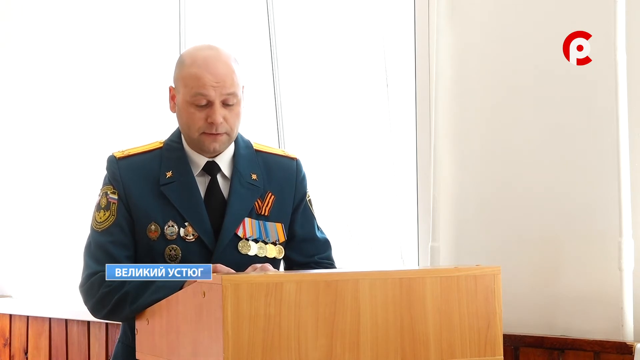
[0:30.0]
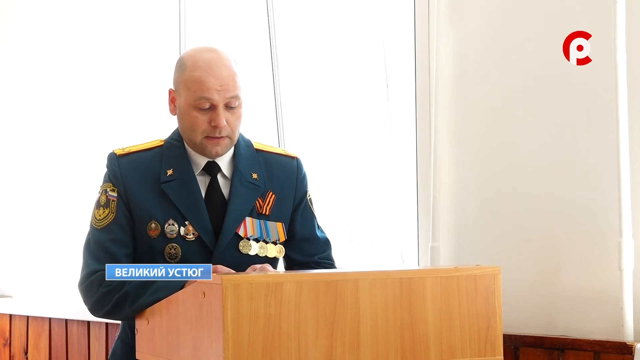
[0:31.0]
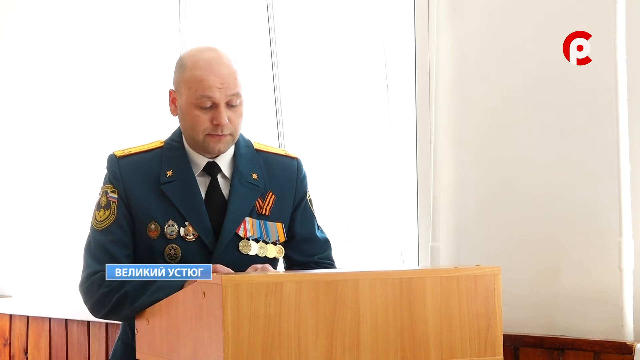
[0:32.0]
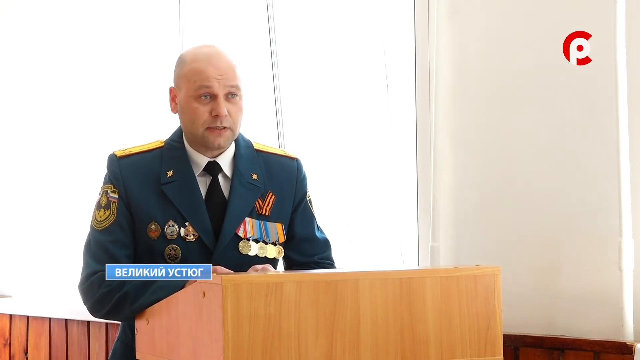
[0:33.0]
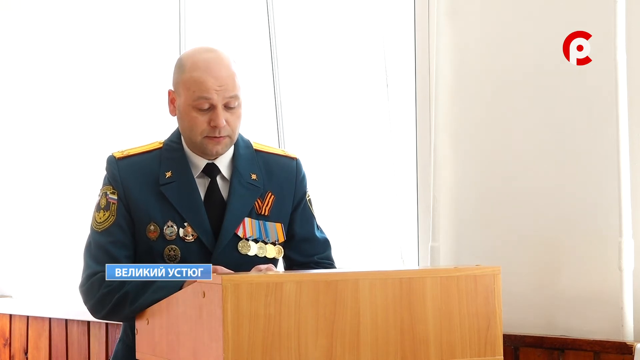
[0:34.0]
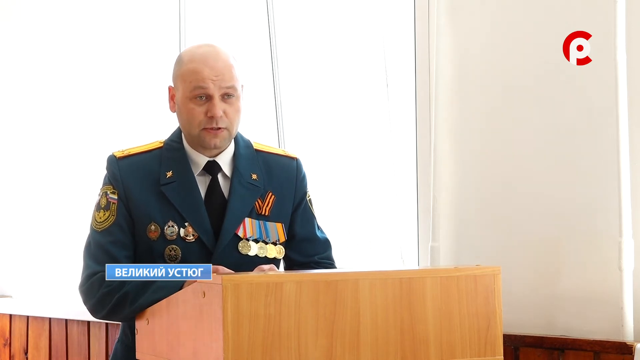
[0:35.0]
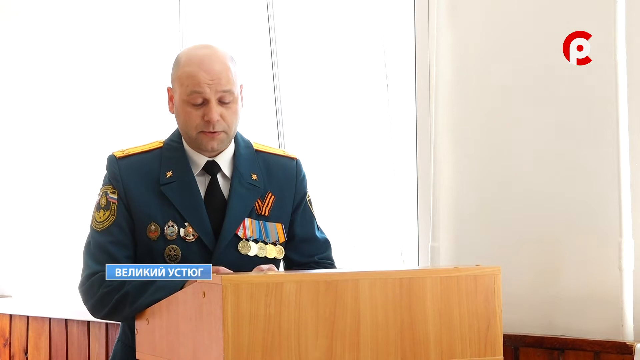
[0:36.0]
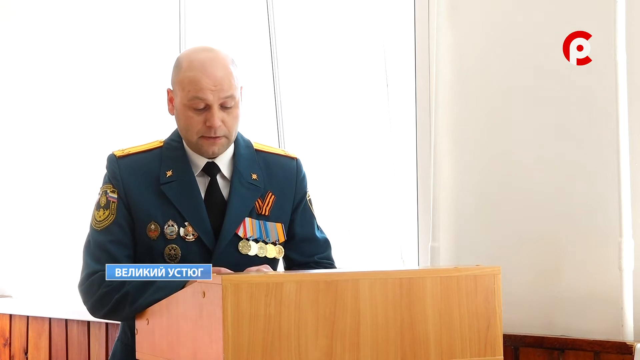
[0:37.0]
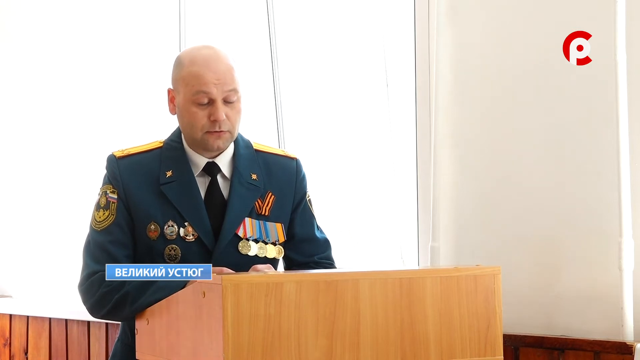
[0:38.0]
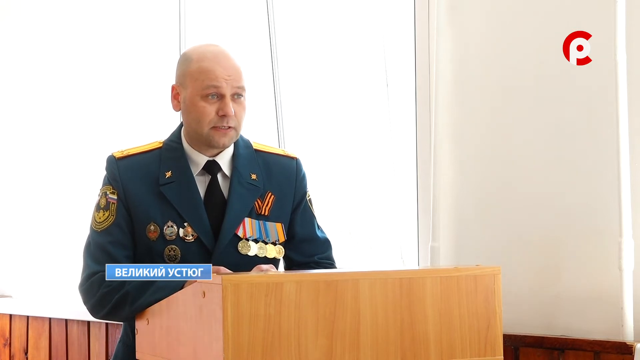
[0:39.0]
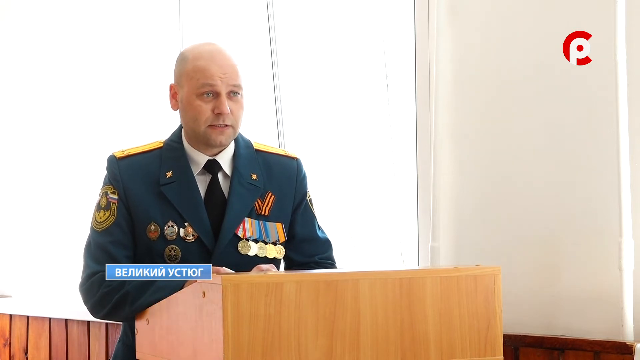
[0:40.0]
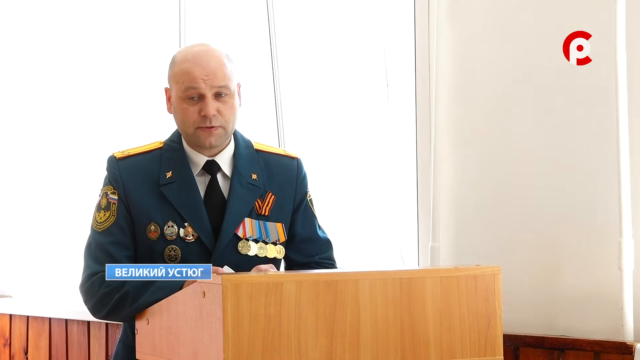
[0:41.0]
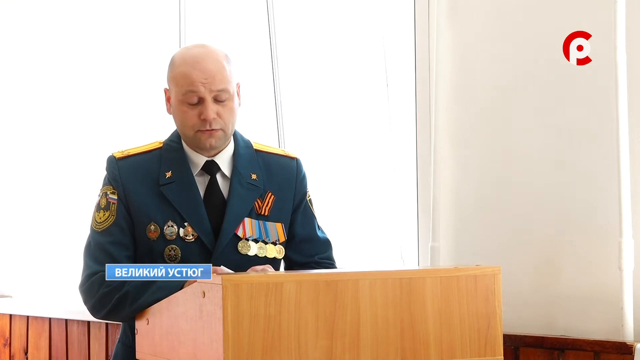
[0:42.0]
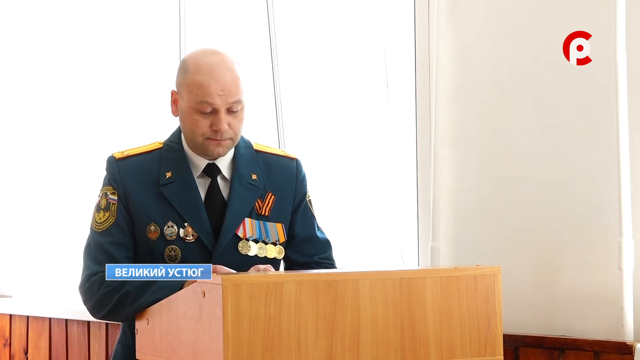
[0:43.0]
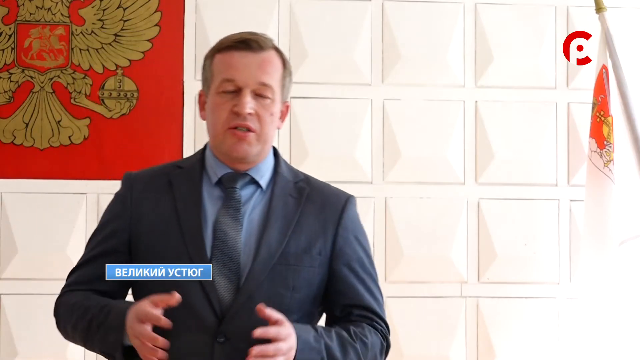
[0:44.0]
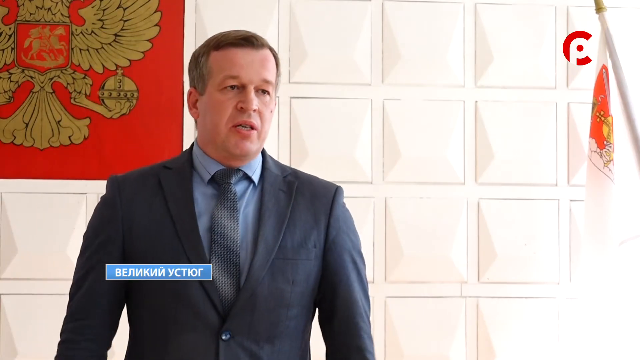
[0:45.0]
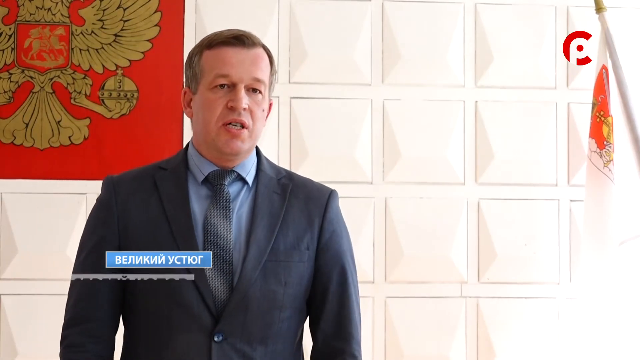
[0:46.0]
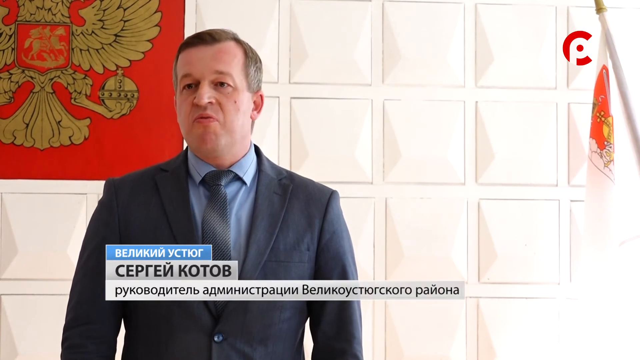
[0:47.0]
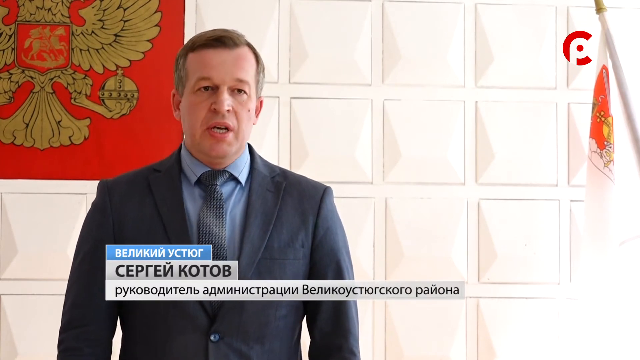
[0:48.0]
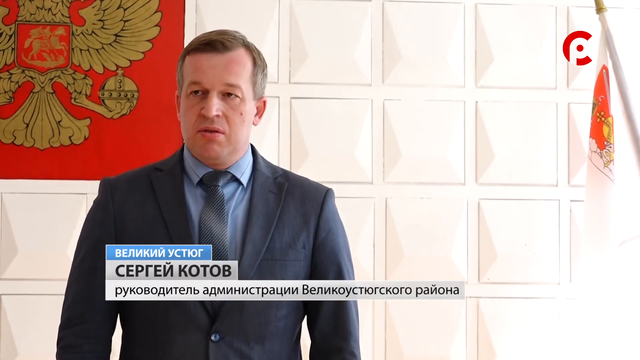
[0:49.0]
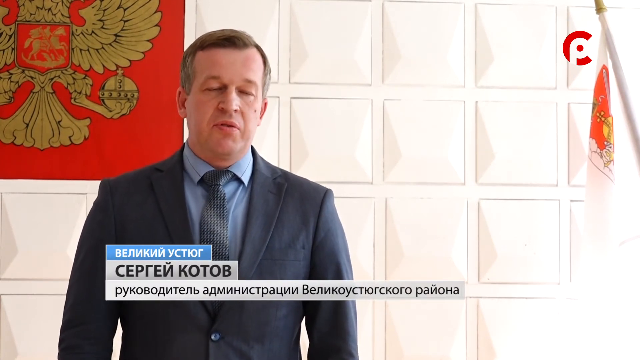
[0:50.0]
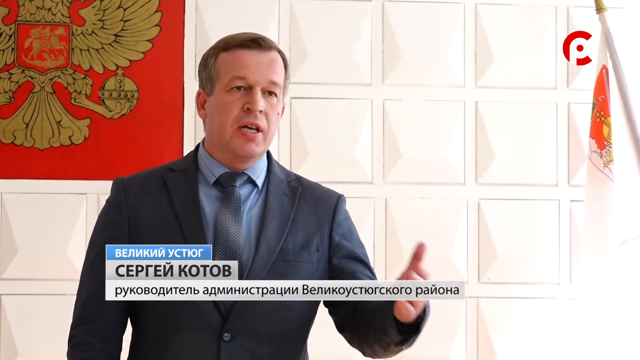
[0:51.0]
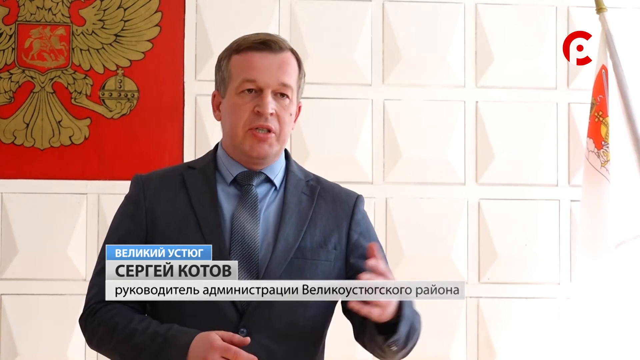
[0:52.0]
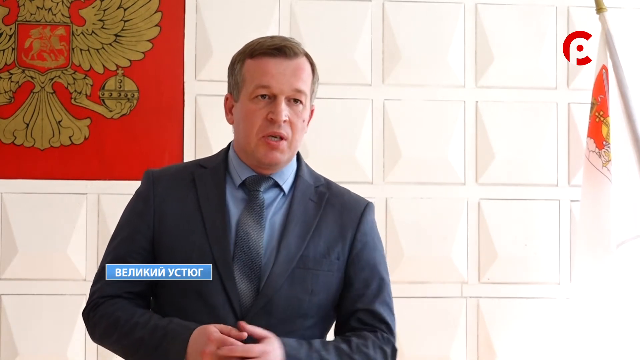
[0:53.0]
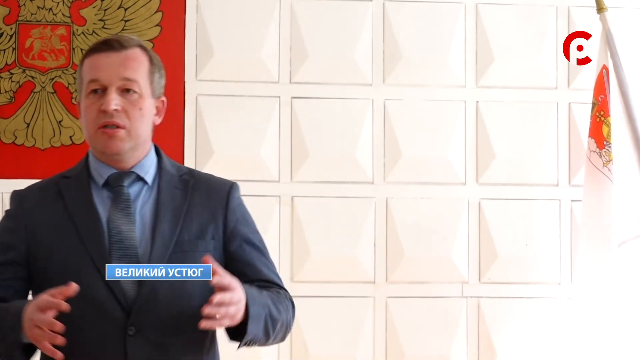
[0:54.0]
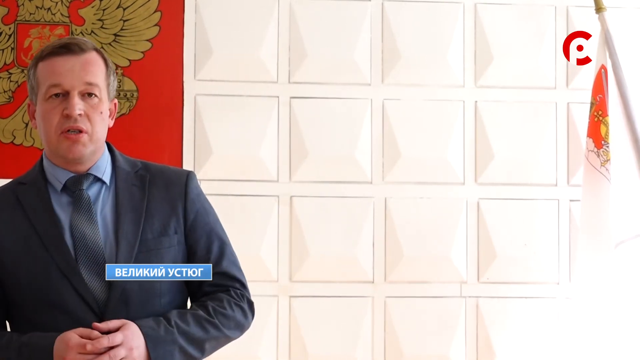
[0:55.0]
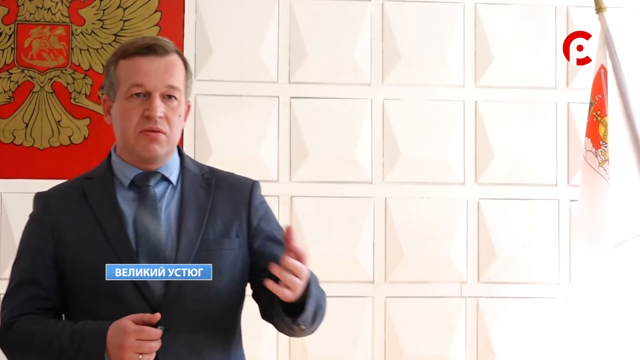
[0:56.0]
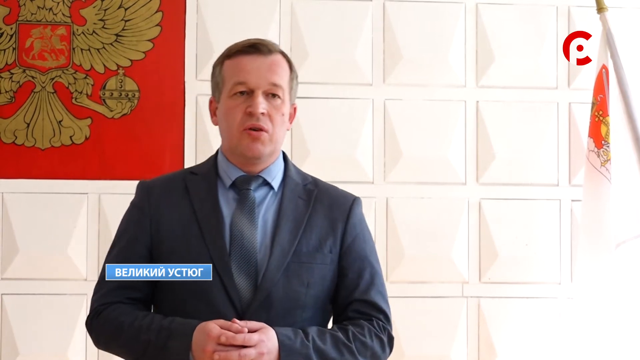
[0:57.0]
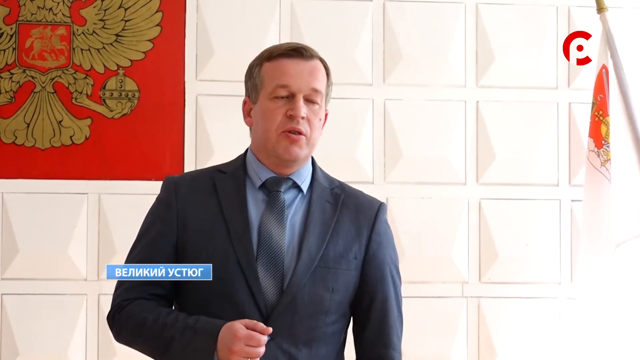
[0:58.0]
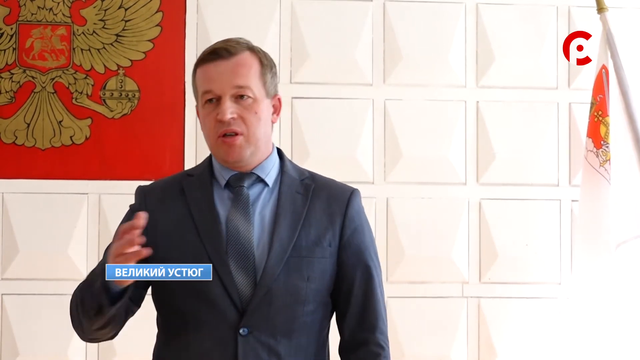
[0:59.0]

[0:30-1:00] The decorated man continues speaking to the crowd from a podium, apparently reading from a script or written notes, against a plain, flat white background. The video then cuts to another man in a suit and tie who is speaking, possibly to the crowd, though he seems to be in a different room because the background is very different: a white wall with square, 3D-style paneling, possibly soundproofing, a flag on the side, and a red flag on the wall in the back showing an eagle holding what looks like a round ball with a cross on top.